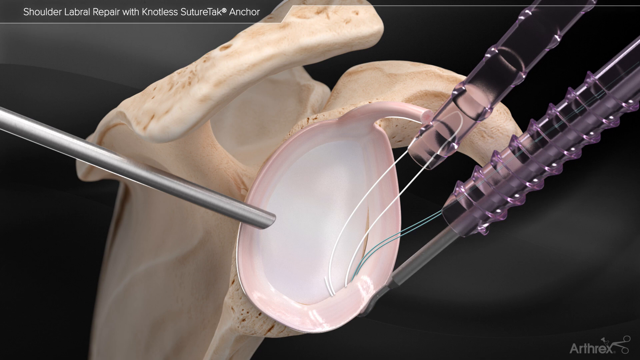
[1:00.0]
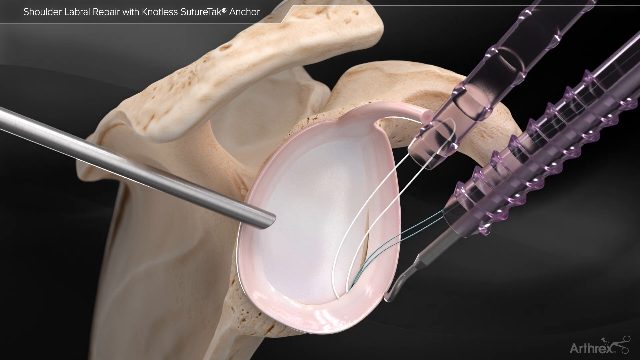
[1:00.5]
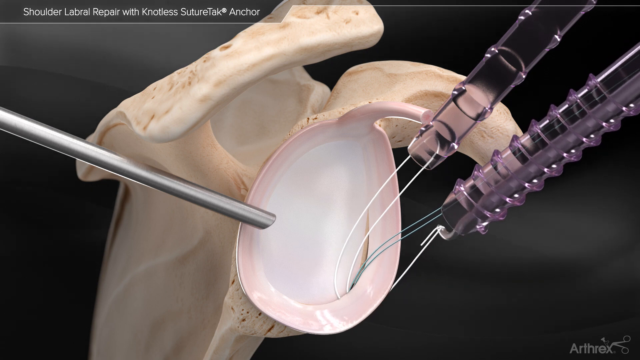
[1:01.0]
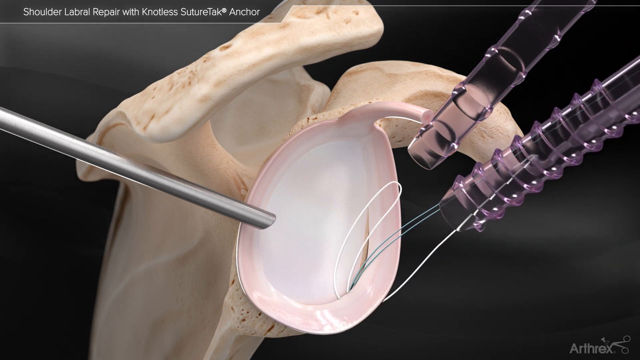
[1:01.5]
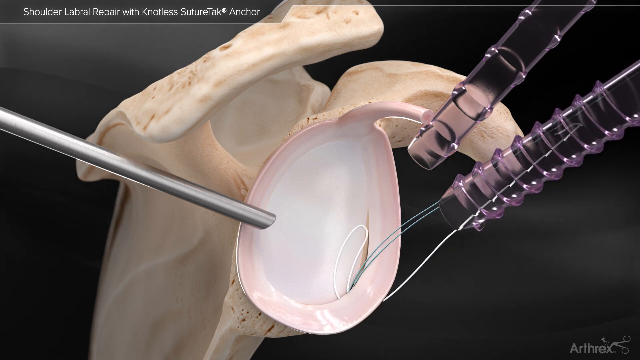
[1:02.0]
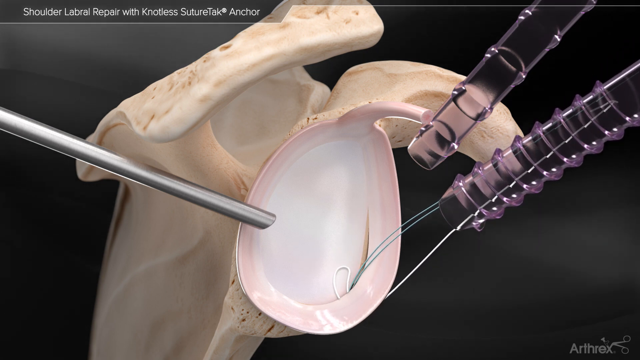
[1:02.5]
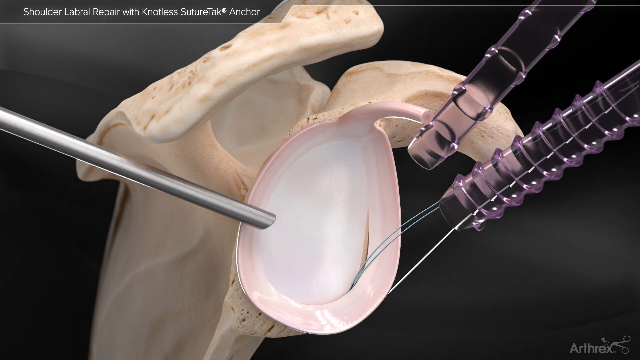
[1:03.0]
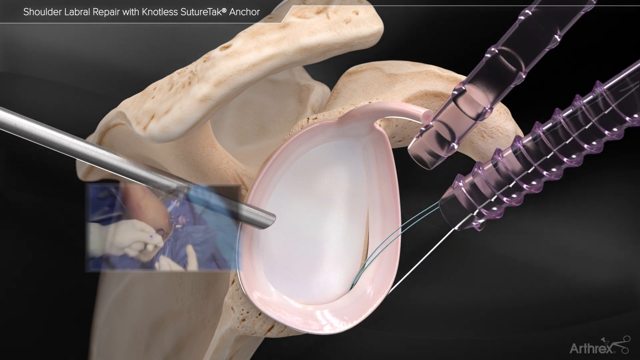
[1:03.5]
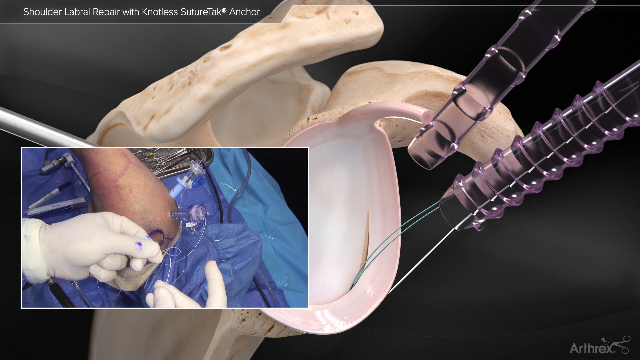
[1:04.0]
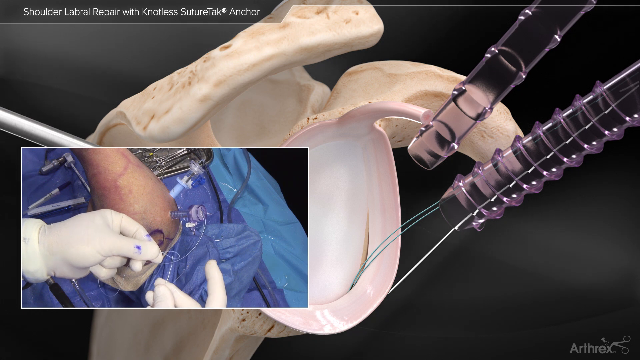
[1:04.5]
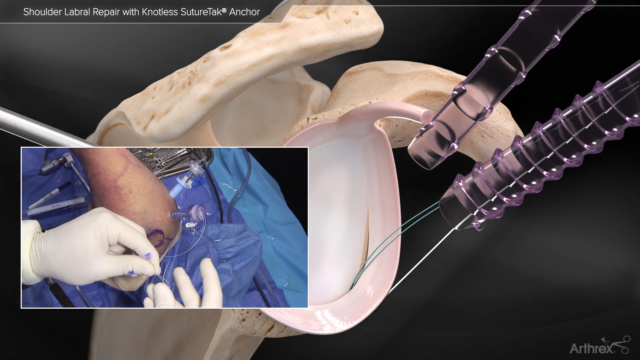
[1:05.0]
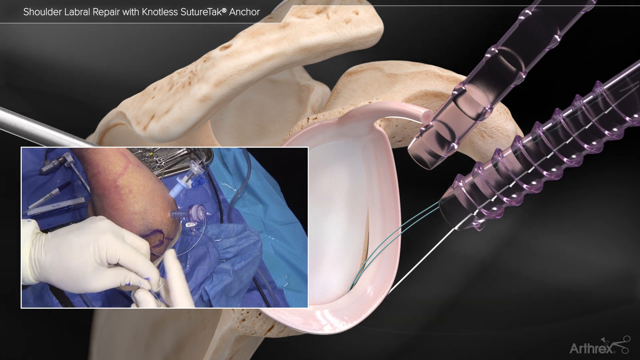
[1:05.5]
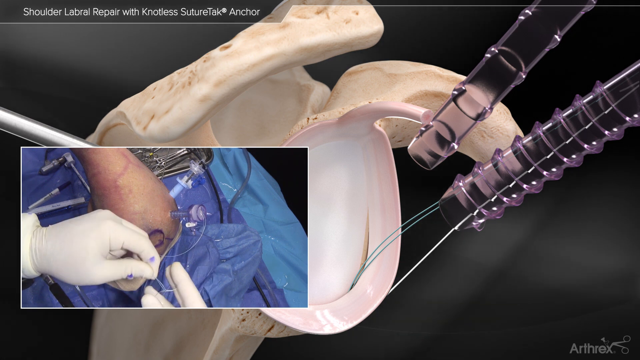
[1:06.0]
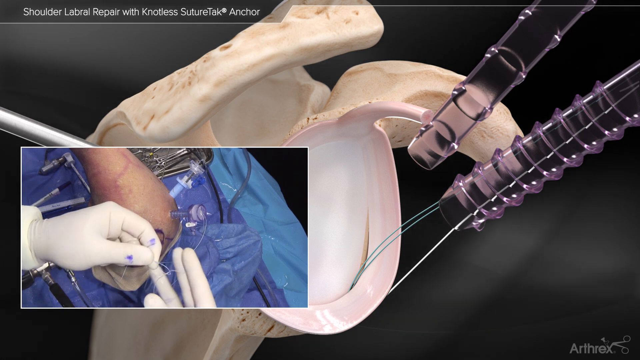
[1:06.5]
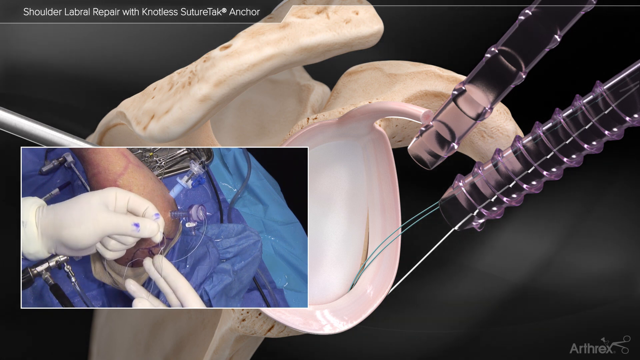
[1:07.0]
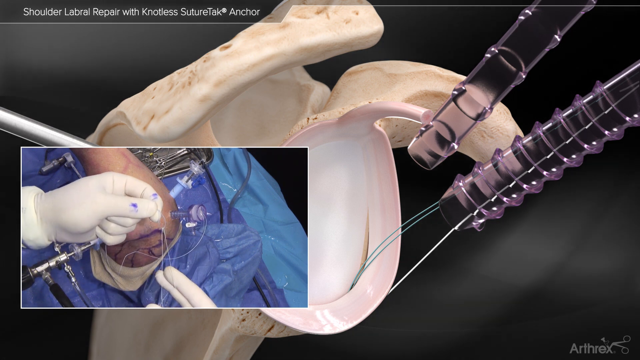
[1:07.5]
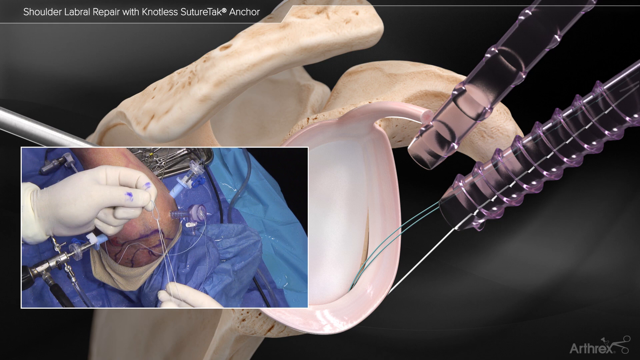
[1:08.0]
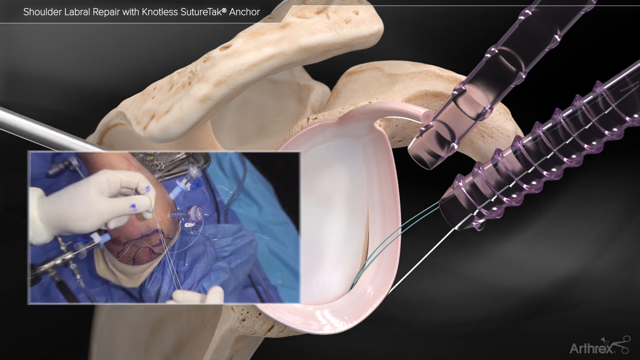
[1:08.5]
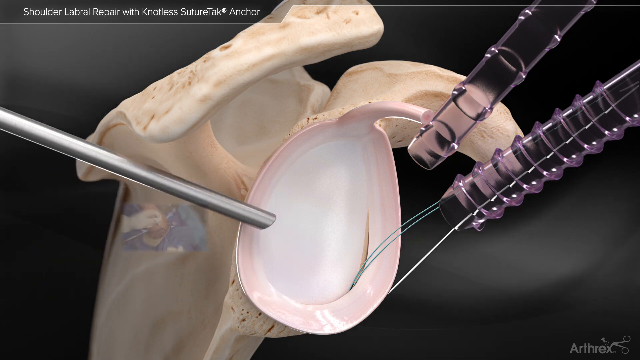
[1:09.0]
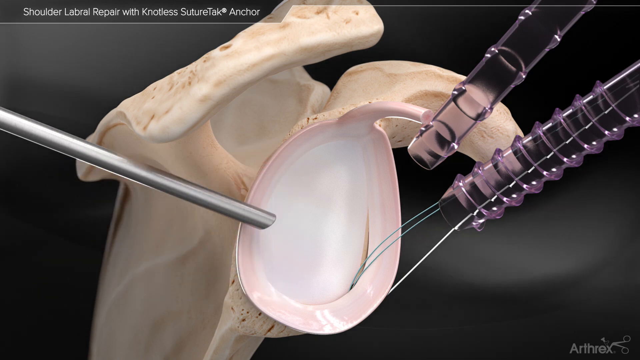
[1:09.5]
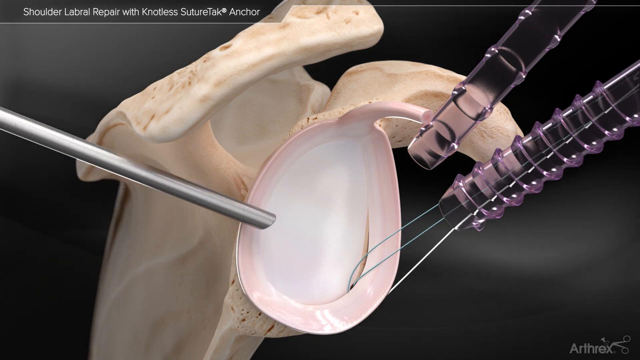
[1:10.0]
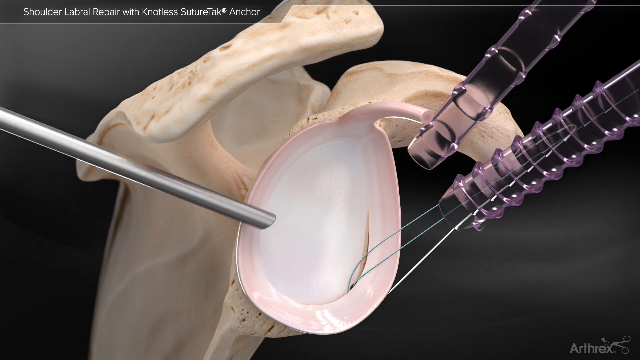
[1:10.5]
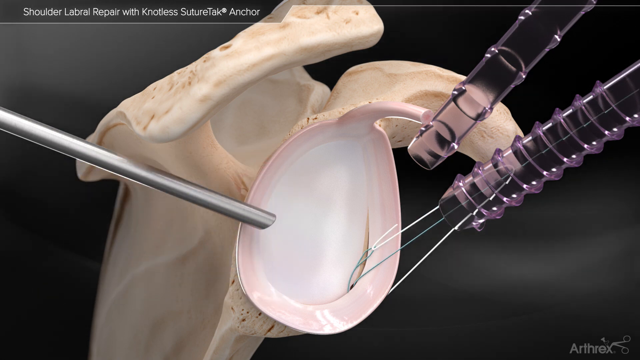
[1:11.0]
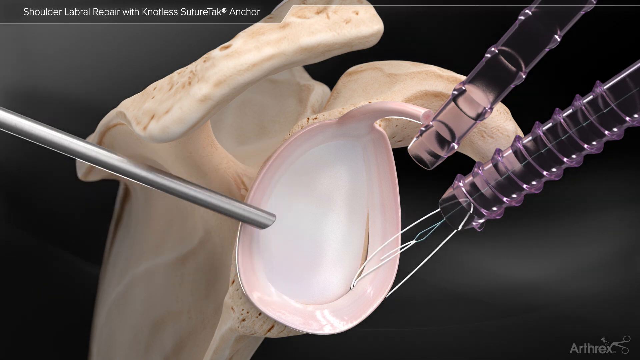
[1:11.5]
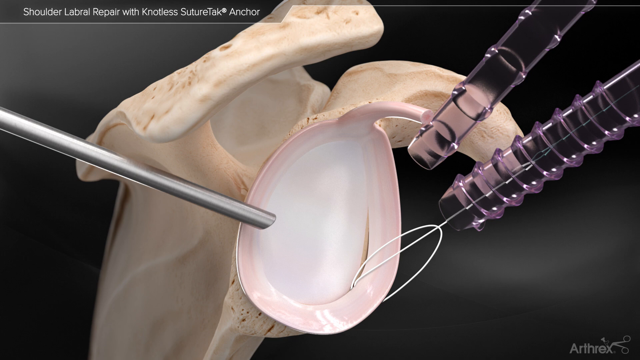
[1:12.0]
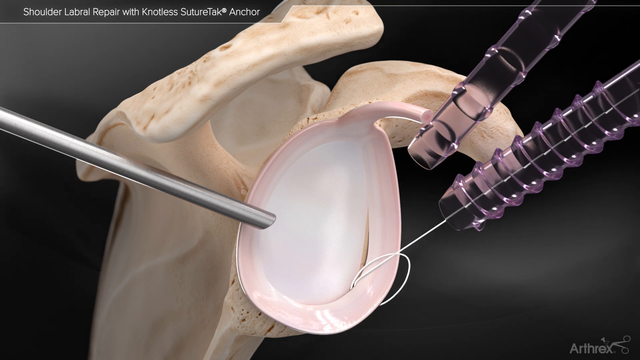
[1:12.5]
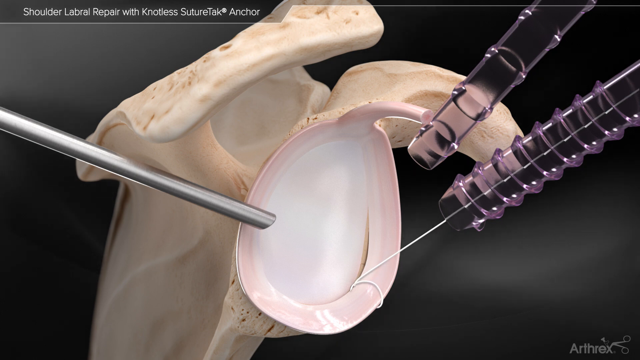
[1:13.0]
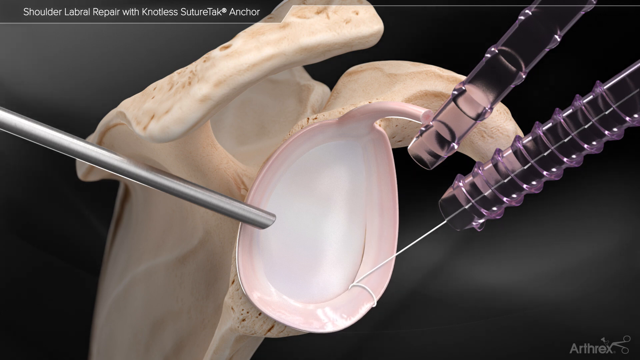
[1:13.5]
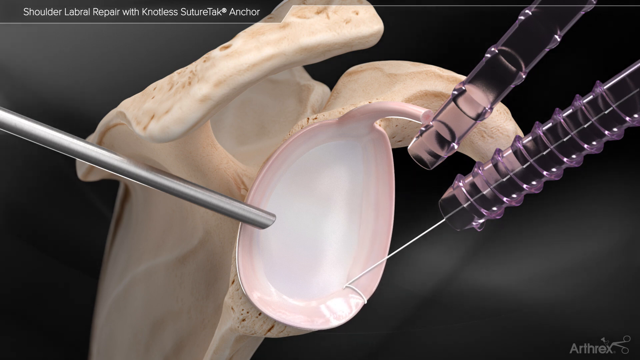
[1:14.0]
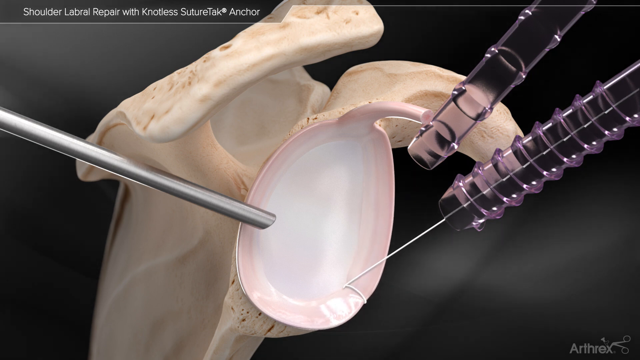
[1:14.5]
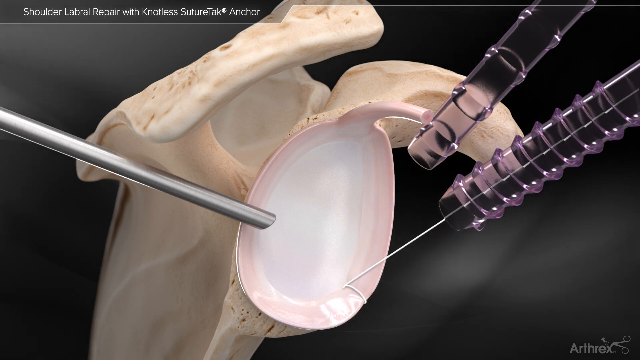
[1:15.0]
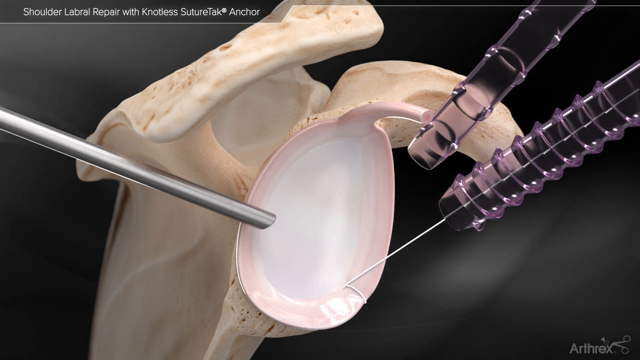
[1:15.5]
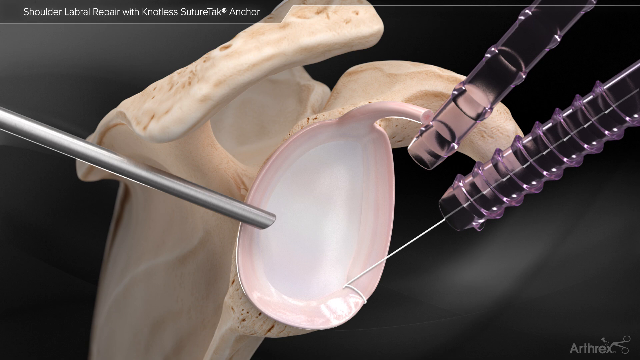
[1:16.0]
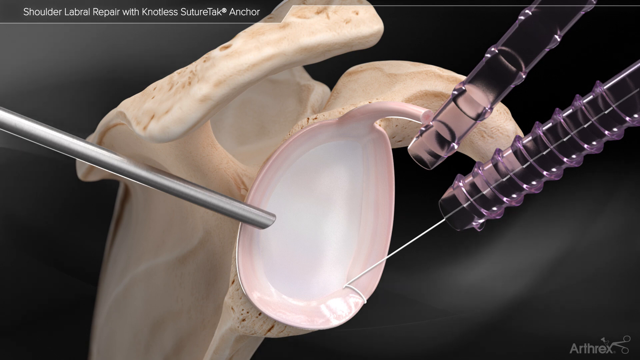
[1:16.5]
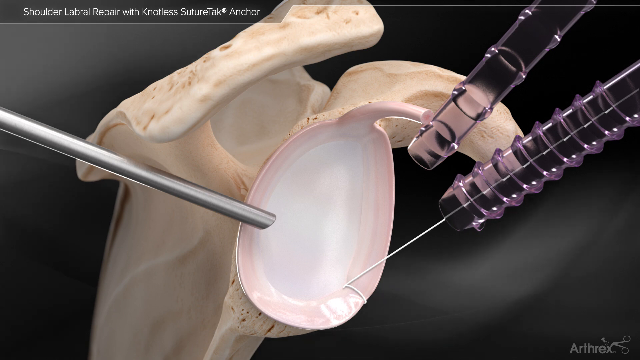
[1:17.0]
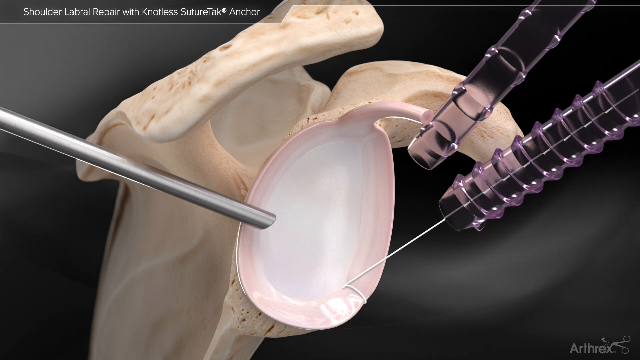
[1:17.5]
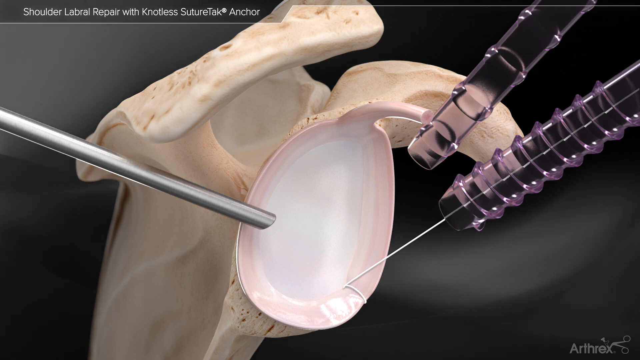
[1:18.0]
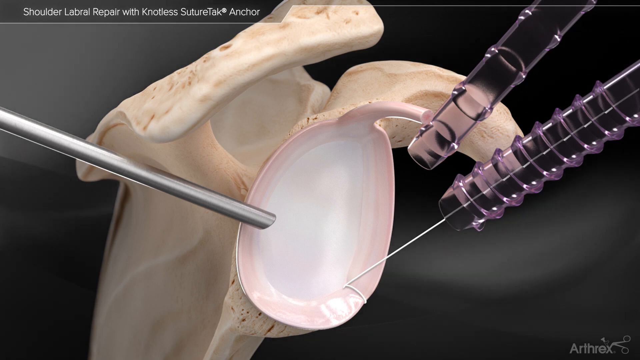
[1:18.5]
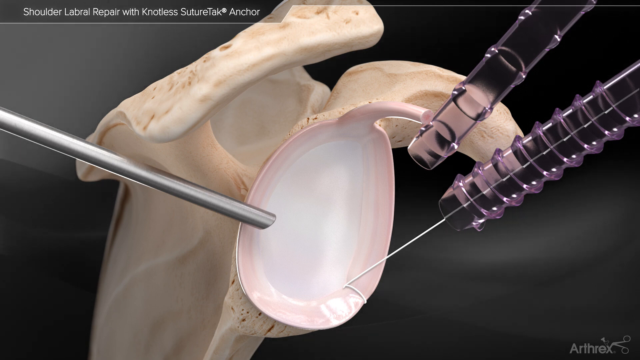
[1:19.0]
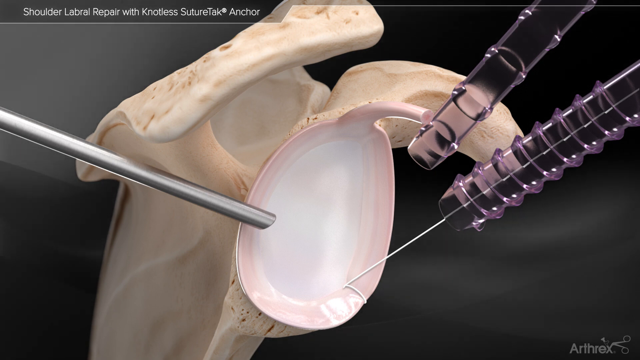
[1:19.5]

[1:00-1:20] Two plastic tubes are shown, possibly in a bone or possibly in somebody's body, and it looks like a wound is being stitched together. Instruments are put down the plastic tubes, which have strings in them; some of the strings are cut, and some are pulled from one tube to another. The area possibly is a person's arm or leg, though it is hard to tell which part of the body is being stitched or fixed. The person using the device wears white gloves, and there is string everywhere. The view then goes back to showing strings in the tube as things are tightened up, which apparently marks the end of the surgery.